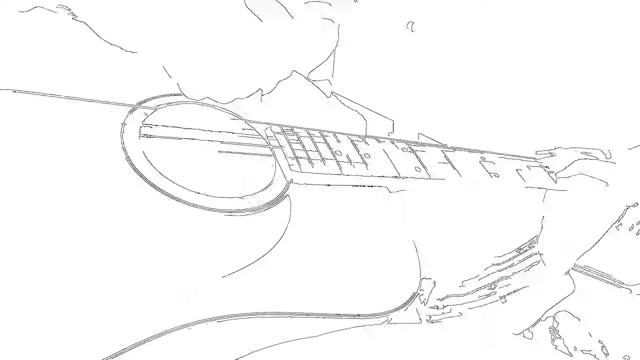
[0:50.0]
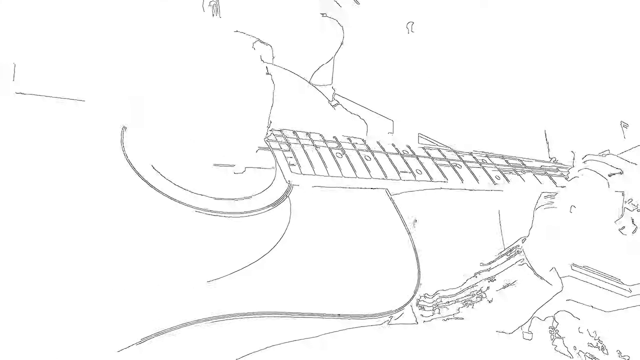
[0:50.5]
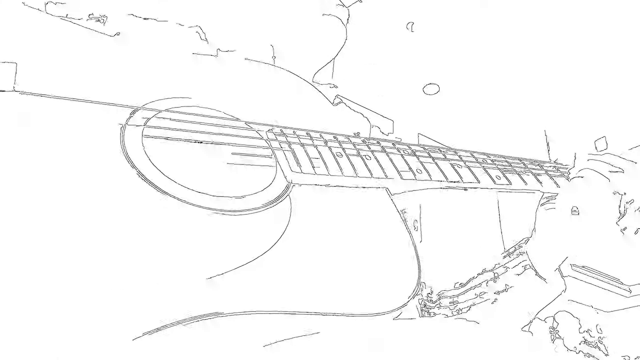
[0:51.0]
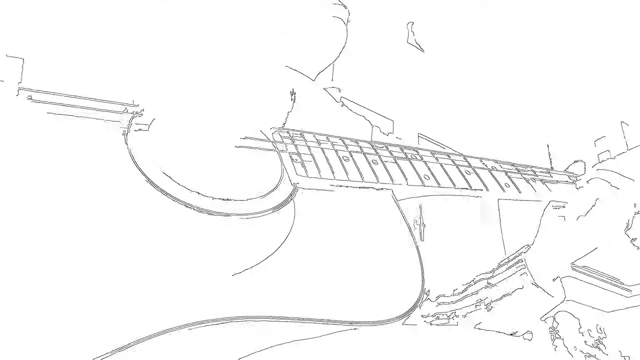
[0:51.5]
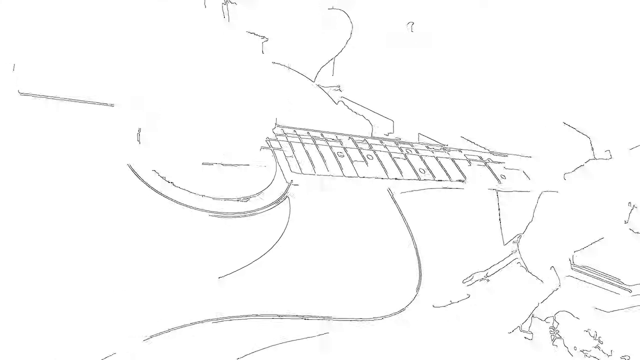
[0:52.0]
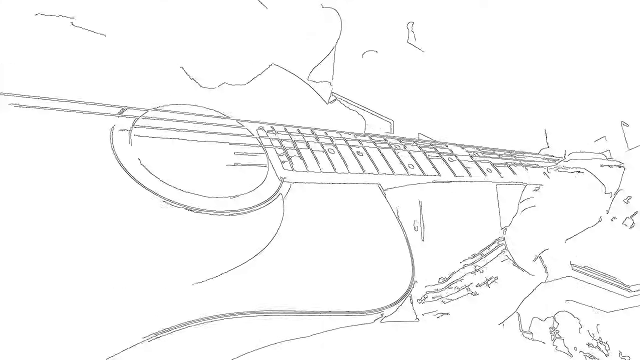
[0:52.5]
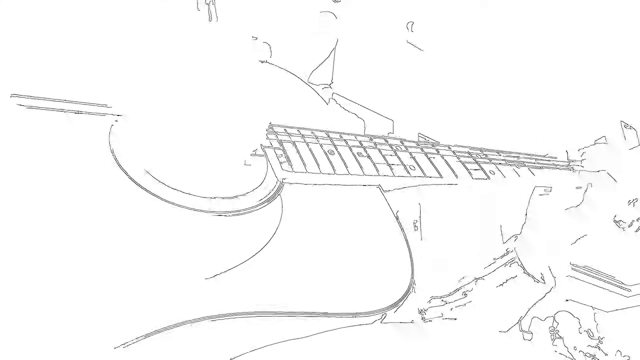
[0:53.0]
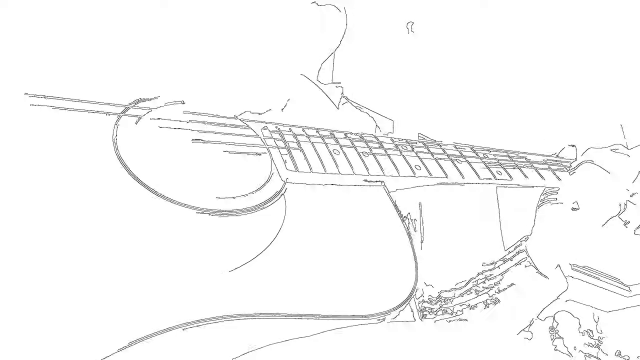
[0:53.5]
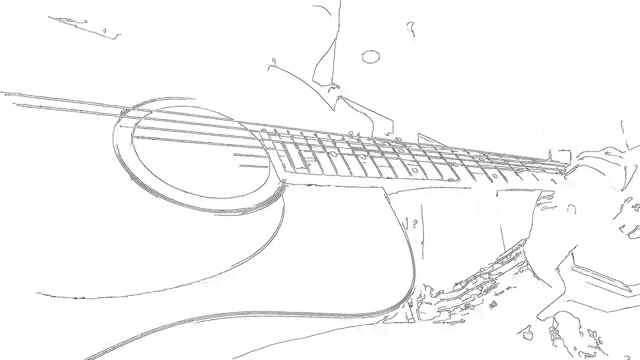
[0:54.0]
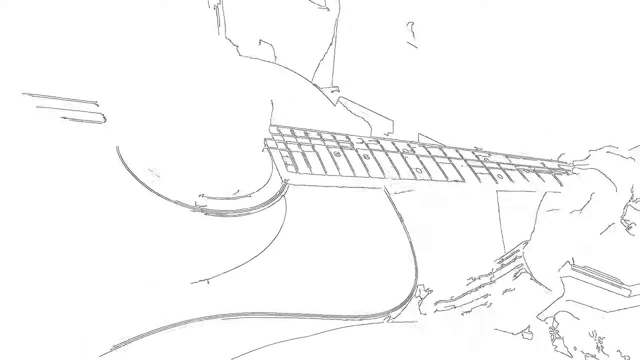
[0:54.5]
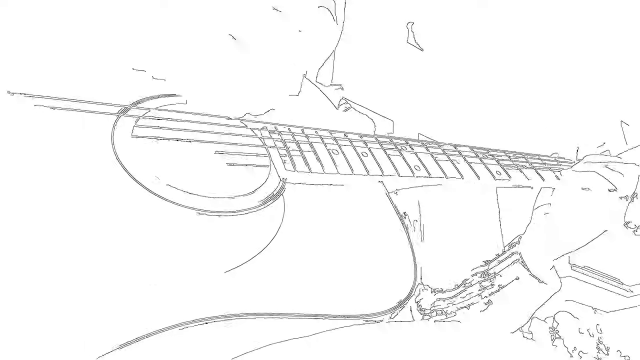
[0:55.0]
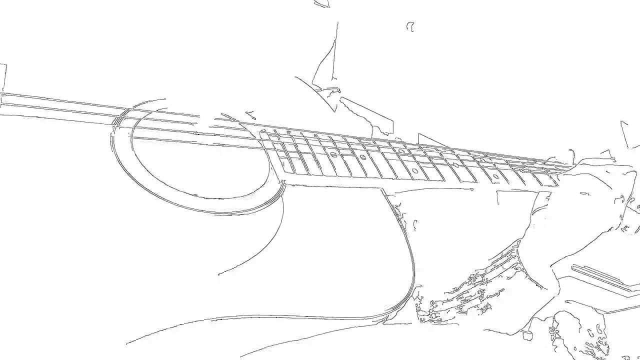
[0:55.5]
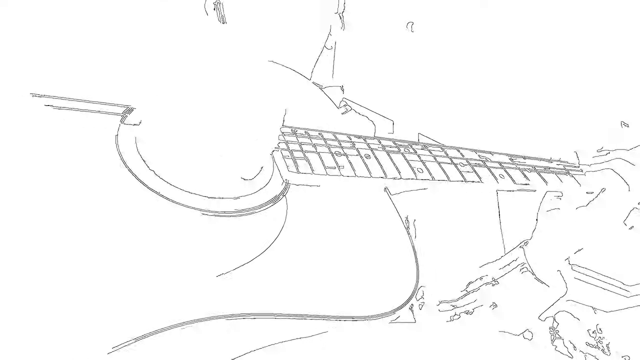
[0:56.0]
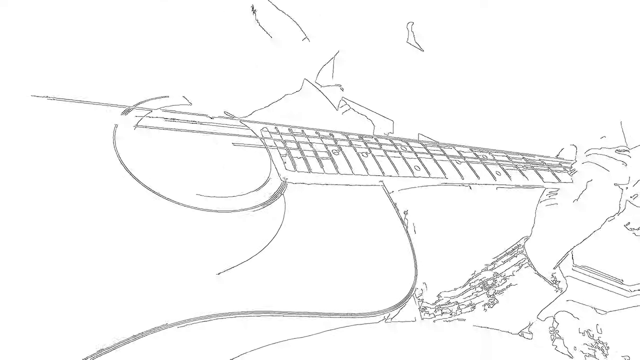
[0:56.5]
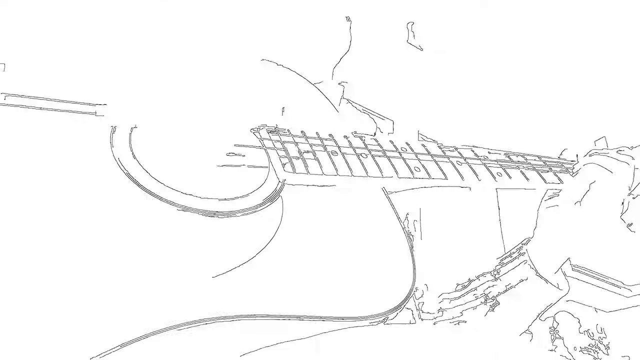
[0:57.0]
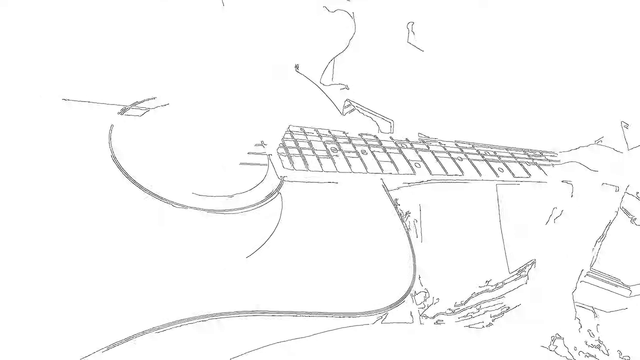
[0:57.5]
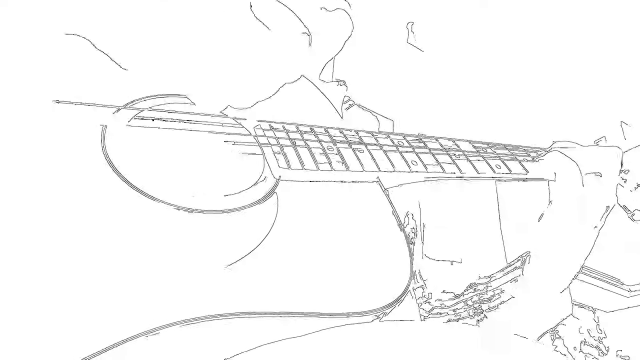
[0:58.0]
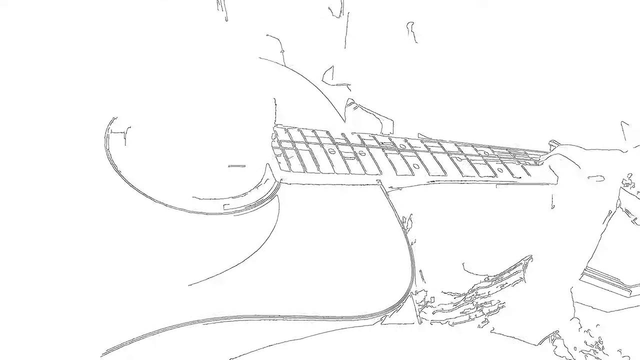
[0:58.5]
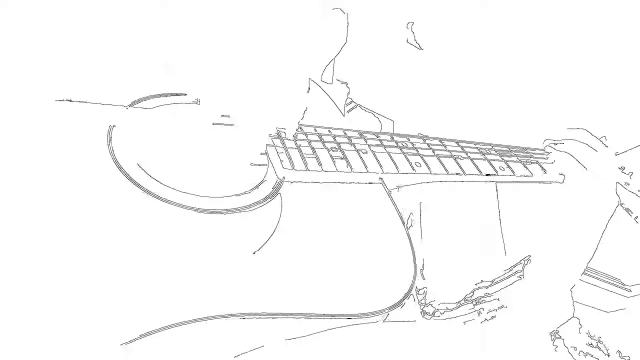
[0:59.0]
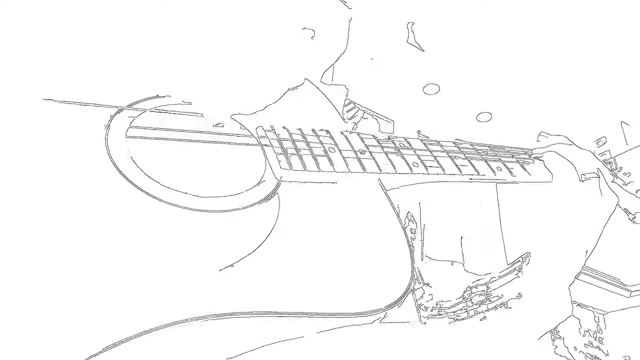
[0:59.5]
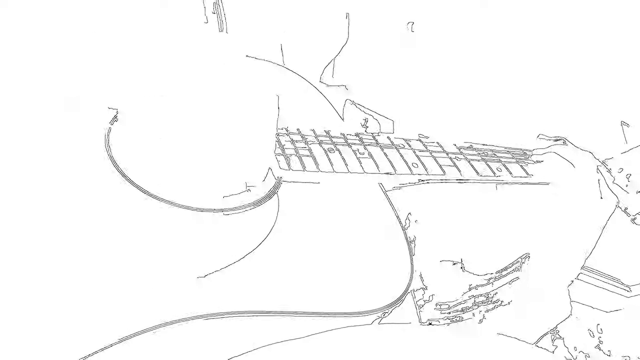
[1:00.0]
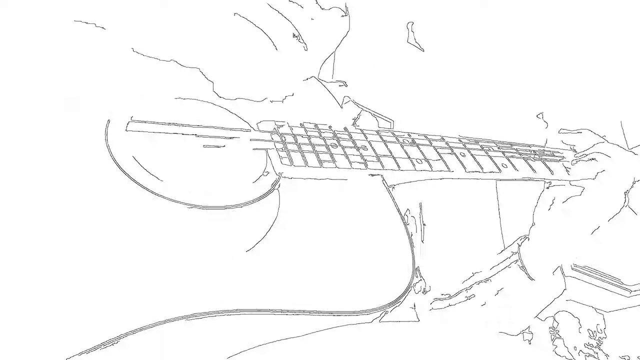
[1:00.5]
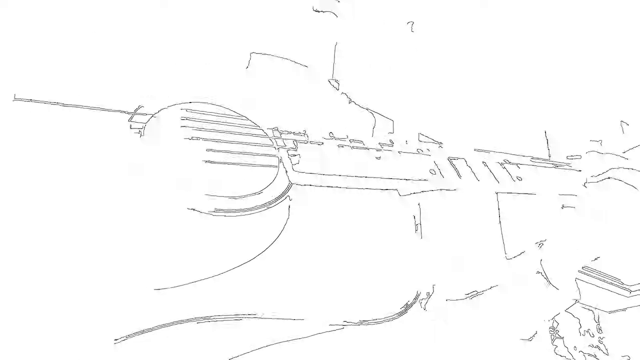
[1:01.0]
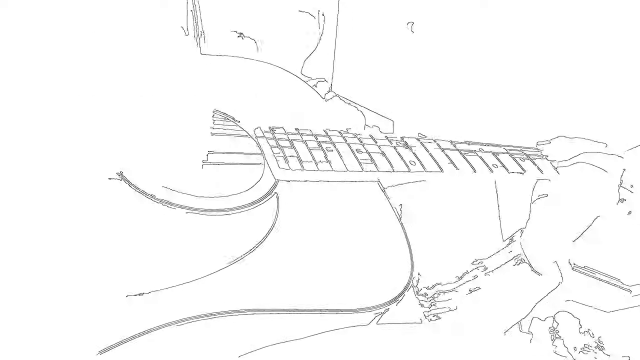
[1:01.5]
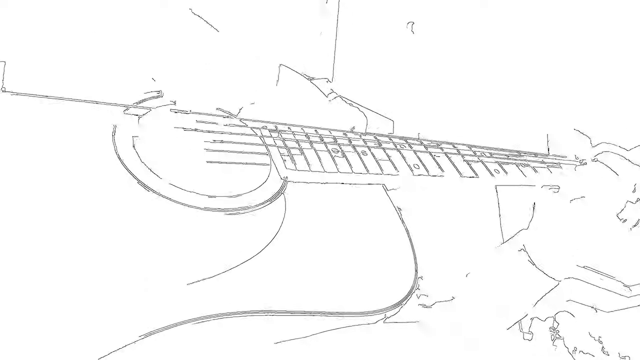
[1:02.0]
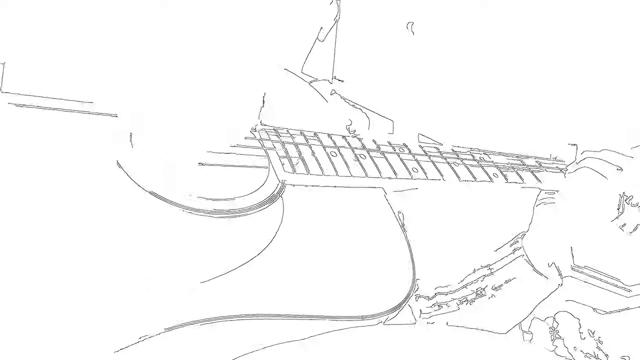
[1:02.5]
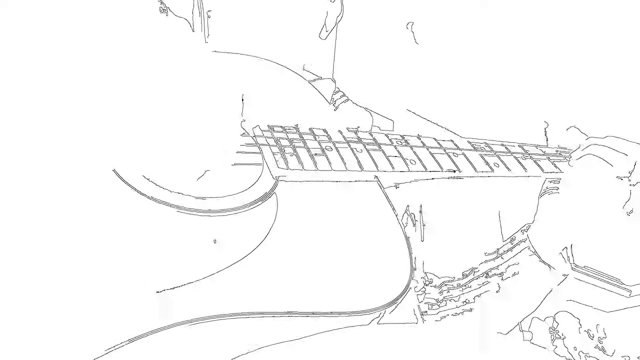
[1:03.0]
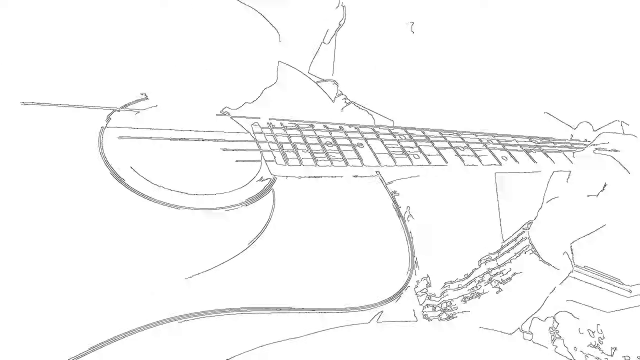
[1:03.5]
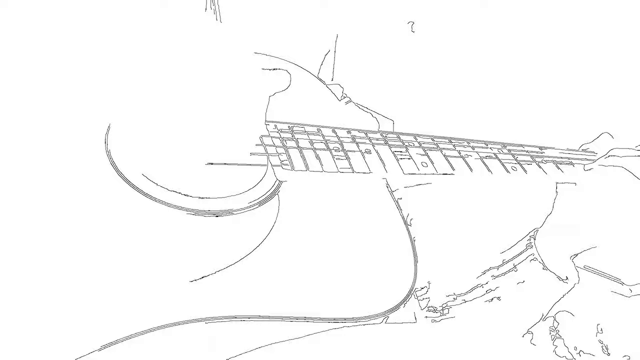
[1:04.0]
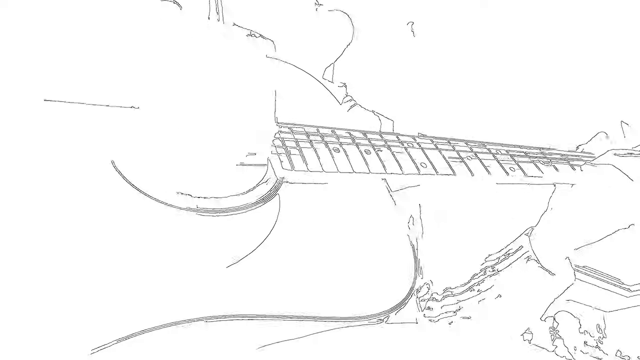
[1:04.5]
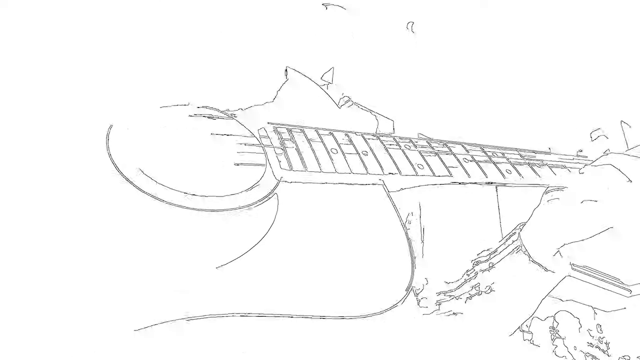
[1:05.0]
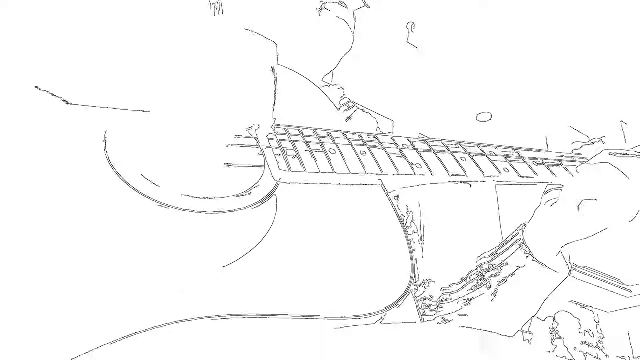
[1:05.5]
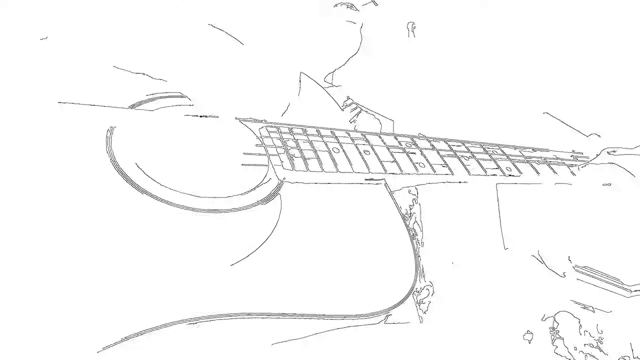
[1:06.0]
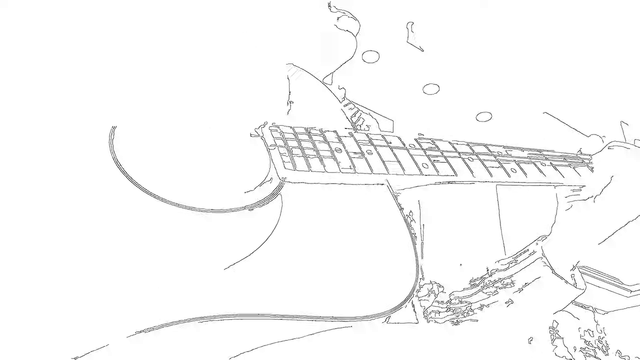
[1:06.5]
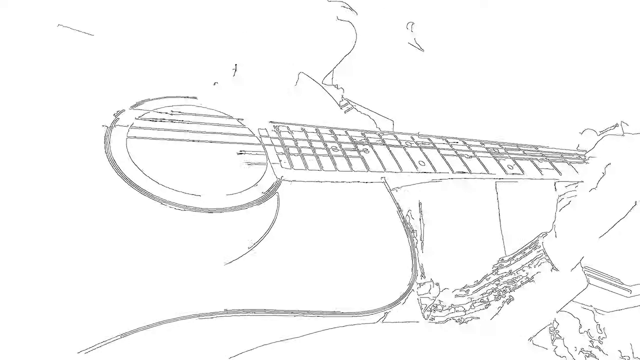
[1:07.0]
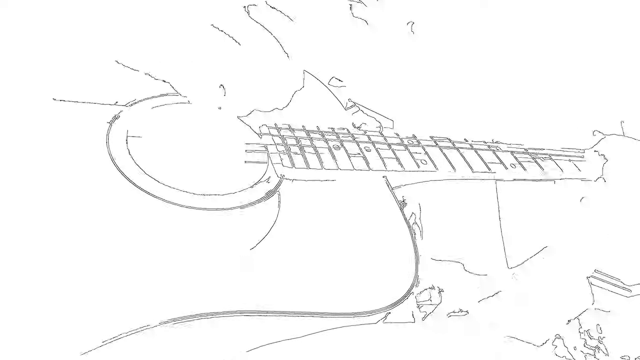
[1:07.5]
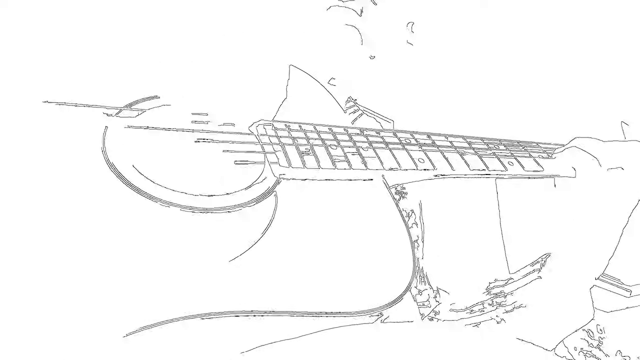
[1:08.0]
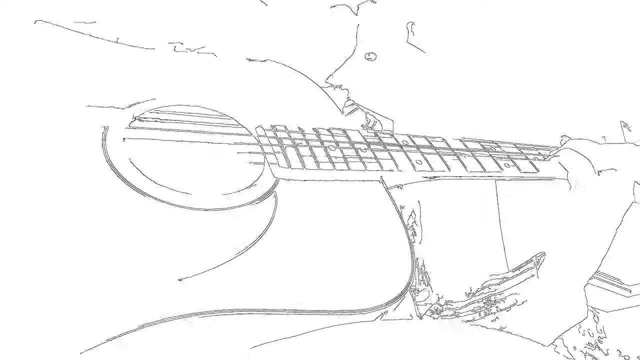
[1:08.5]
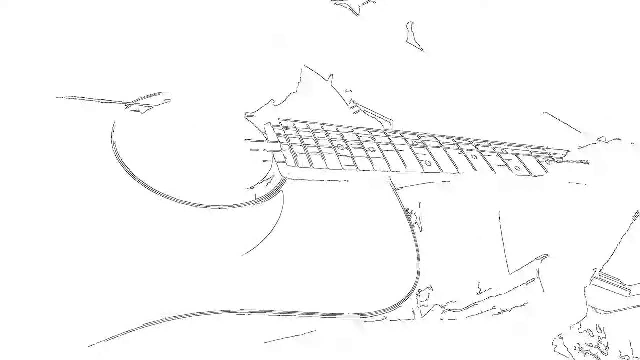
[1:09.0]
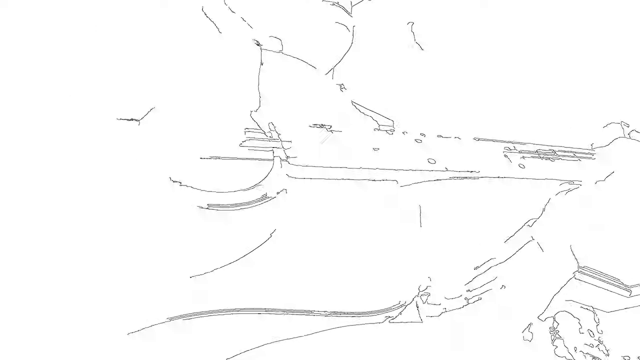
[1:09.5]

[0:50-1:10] The man keeps playing the guitar and singing, with the kitchen behind him. He sits on either a stool or possibly a kitchen table chair. The camera is possibly on a table or some surface lower than him, at knee level. Despite the filter meant to make it look like an illustrated drawing, the individual guitar strings are visible as he plays them, along with a line-drawing-style reflection in the front panel of the guitar. The guitar appears to be wood, with some sort of plastic or vinyl cutout pattern on the front. His fingernails are quite long, and he wears a wedding band on his left hand. As the lower half of his face dips in and out of frame, he appears to possibly have a short beard. He wears eyeglasses and has what looks like a short haircut, his hair ending at the nape of his neck. He wears what looks like a ribbed, zipped-up cardigan and a shirt with a collar, and is otherwise dressed casually, his pants appearing to be either jeans or some sort of khakis.